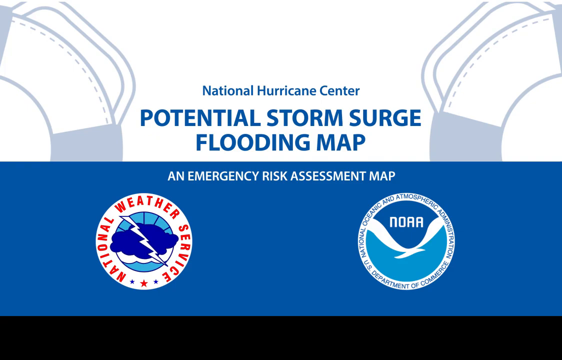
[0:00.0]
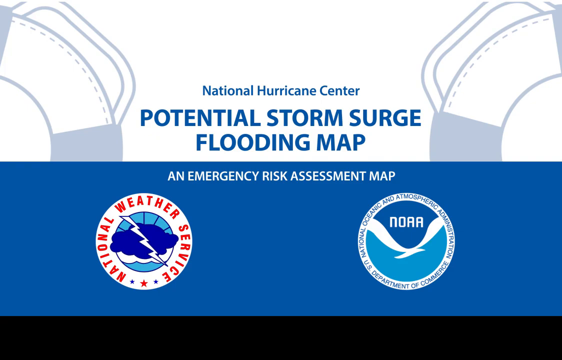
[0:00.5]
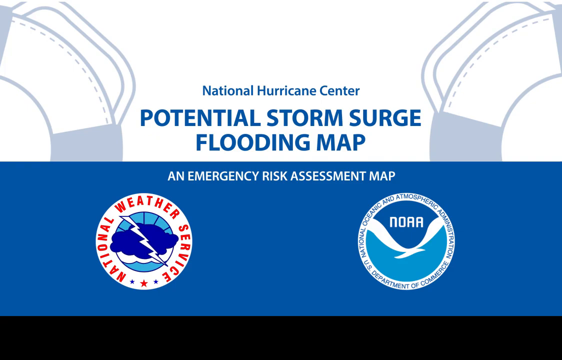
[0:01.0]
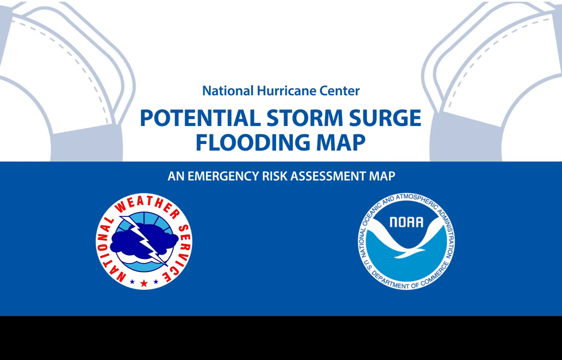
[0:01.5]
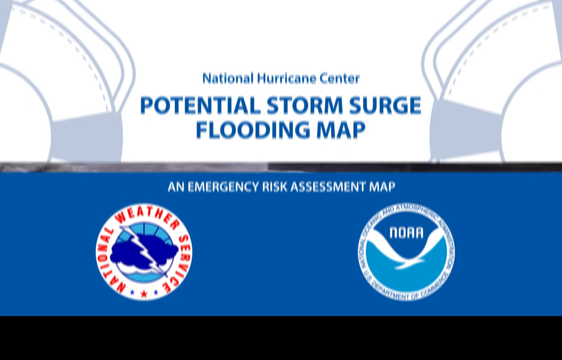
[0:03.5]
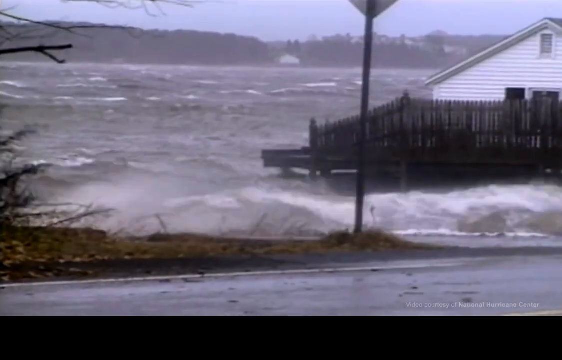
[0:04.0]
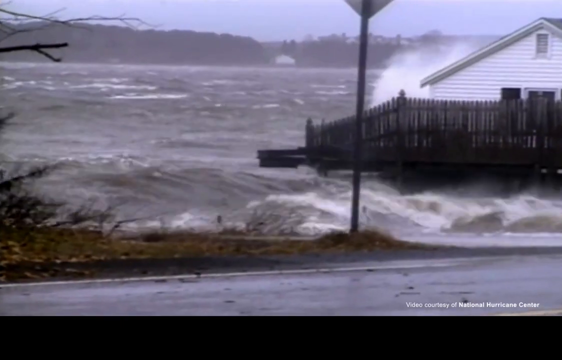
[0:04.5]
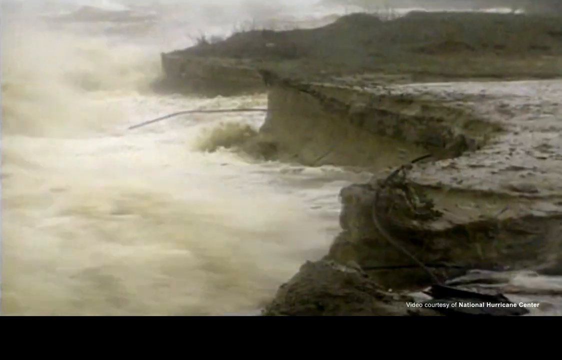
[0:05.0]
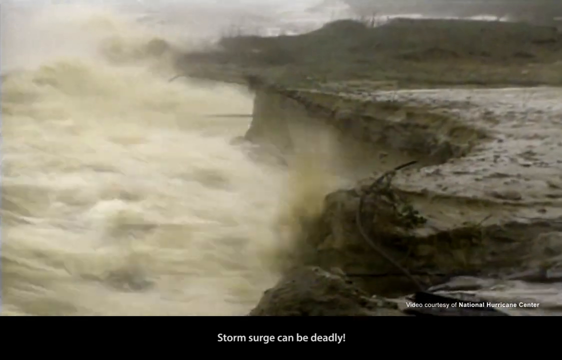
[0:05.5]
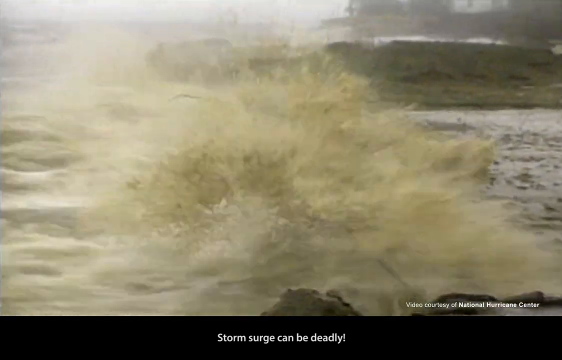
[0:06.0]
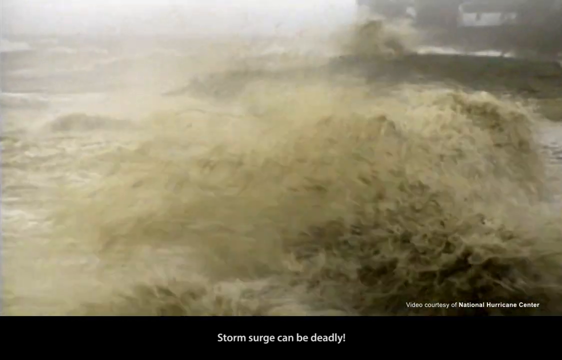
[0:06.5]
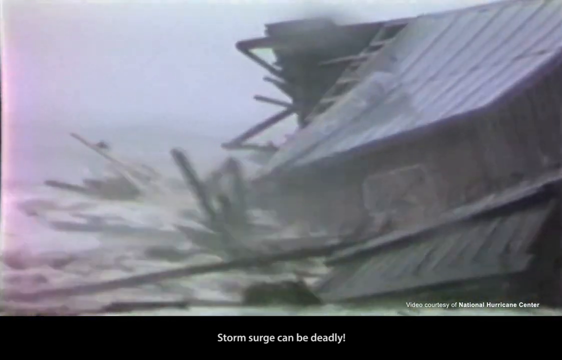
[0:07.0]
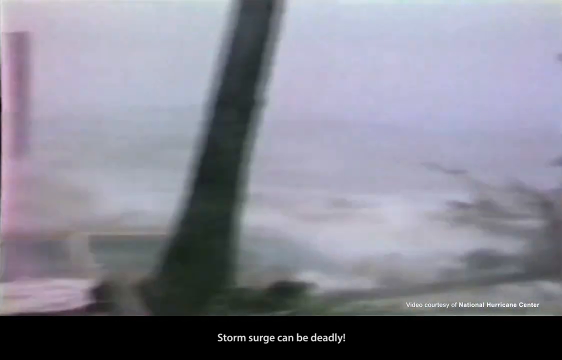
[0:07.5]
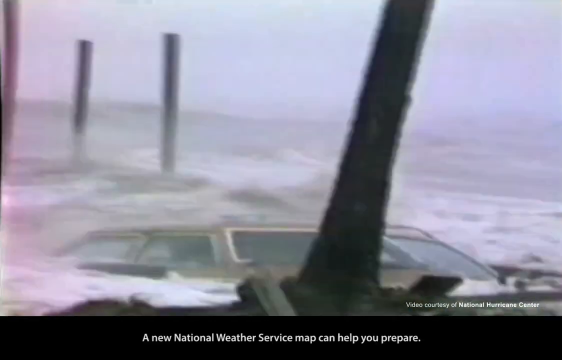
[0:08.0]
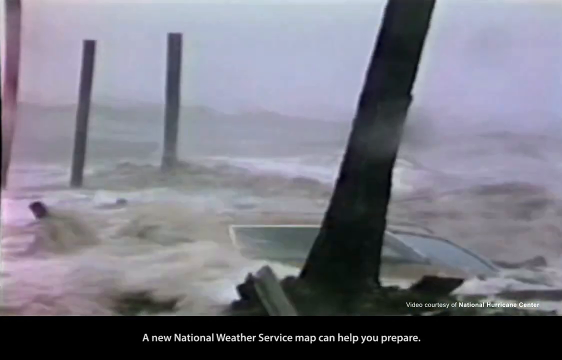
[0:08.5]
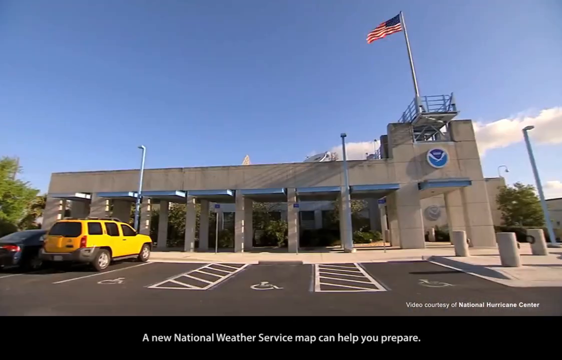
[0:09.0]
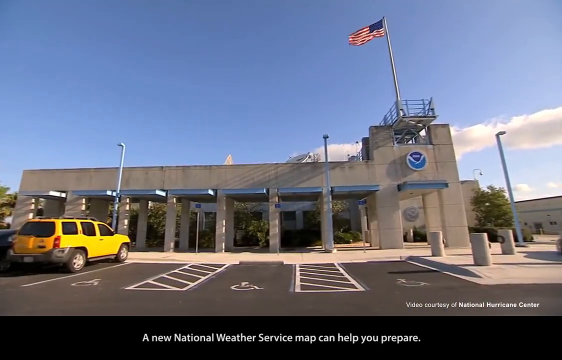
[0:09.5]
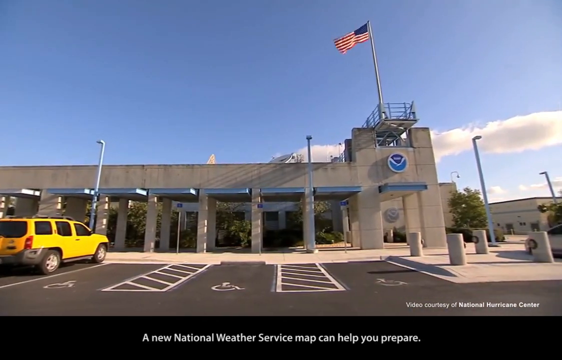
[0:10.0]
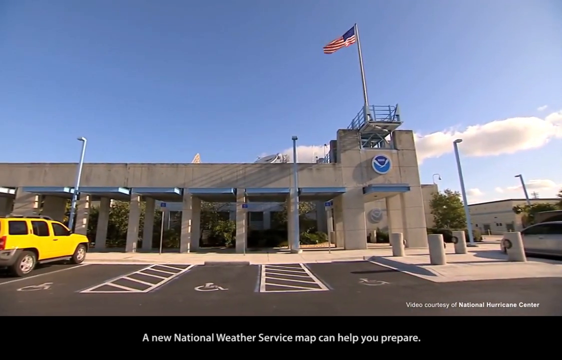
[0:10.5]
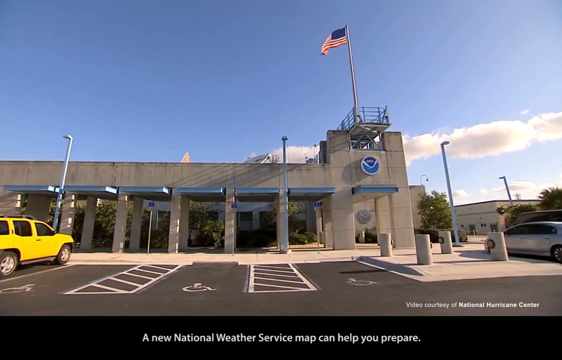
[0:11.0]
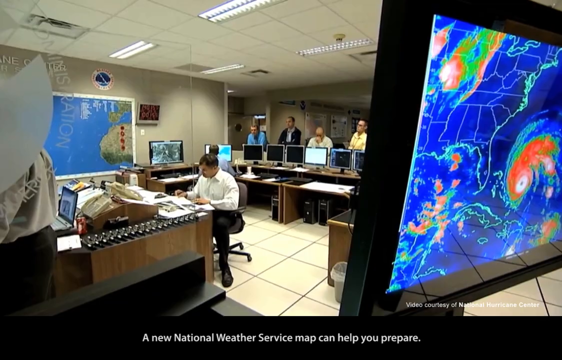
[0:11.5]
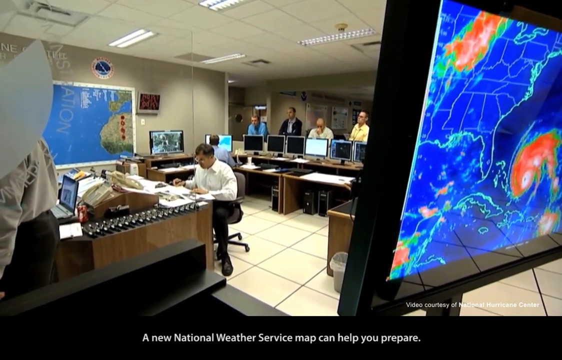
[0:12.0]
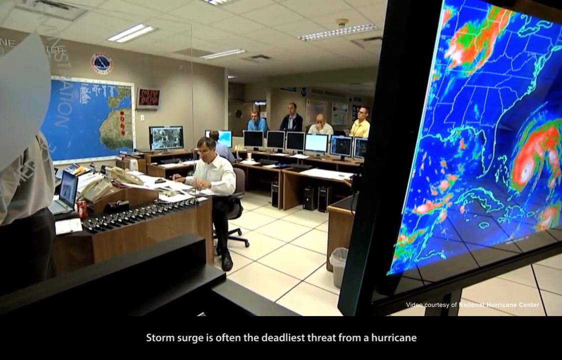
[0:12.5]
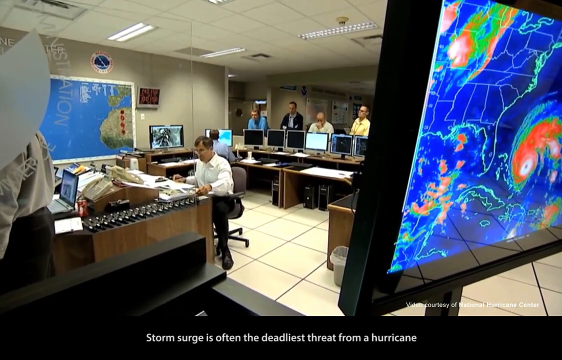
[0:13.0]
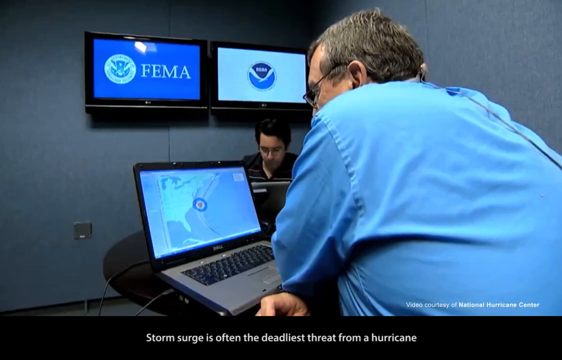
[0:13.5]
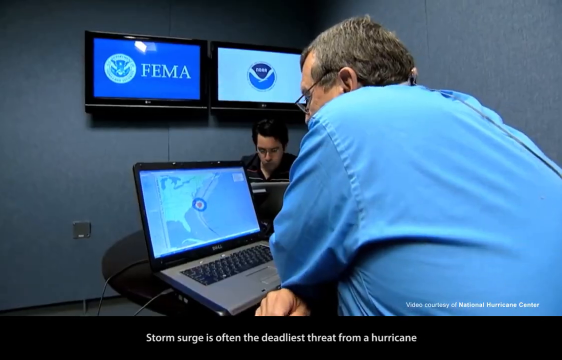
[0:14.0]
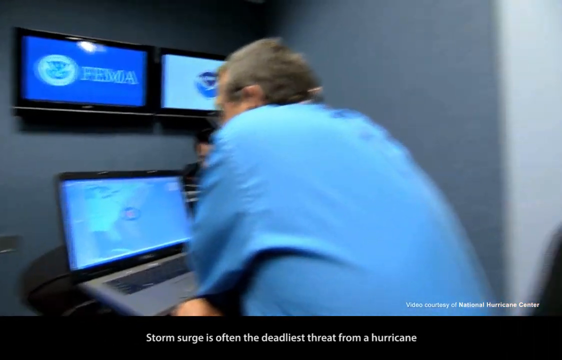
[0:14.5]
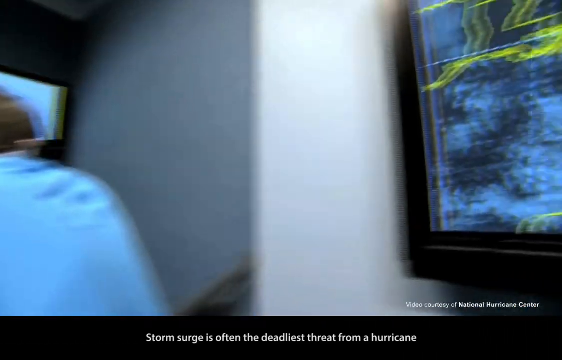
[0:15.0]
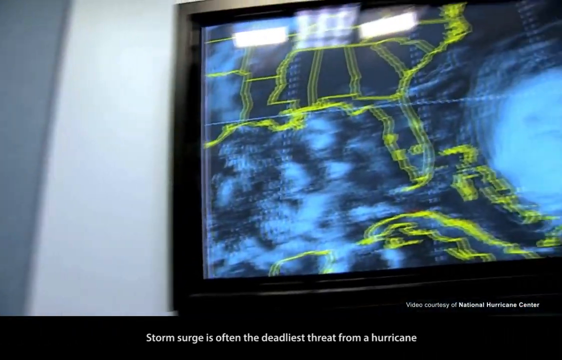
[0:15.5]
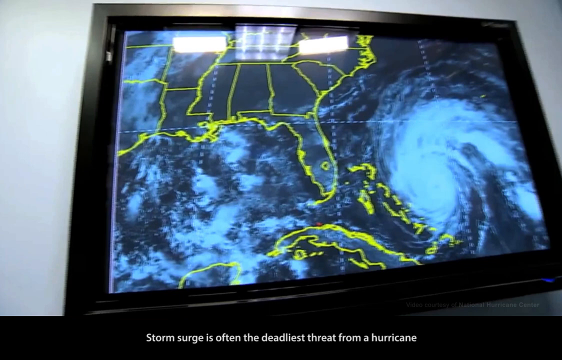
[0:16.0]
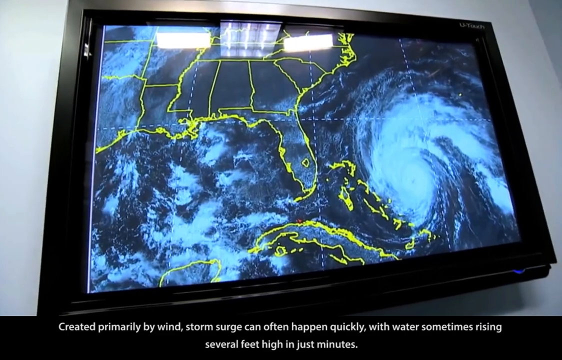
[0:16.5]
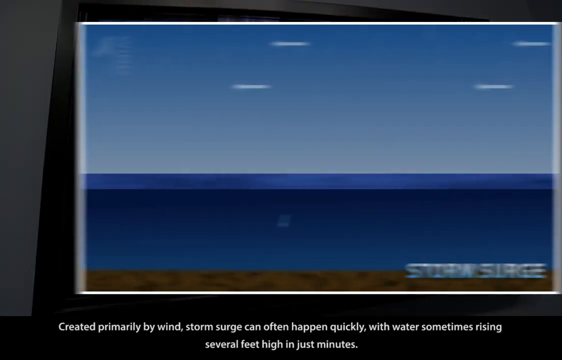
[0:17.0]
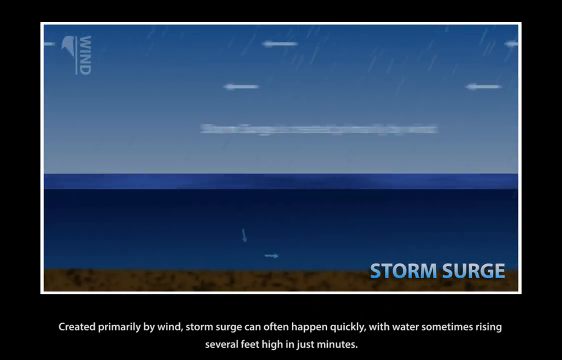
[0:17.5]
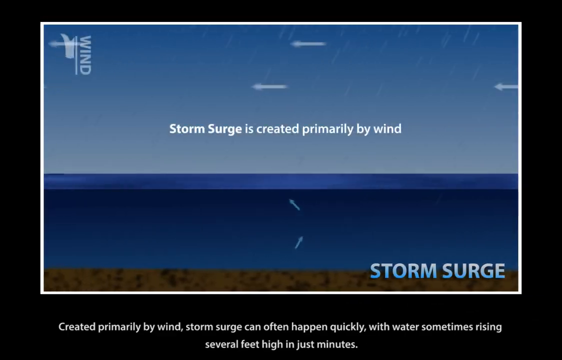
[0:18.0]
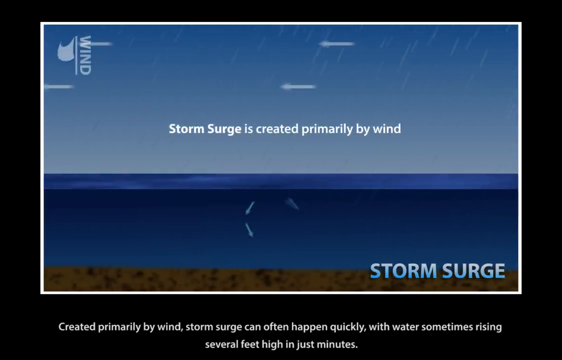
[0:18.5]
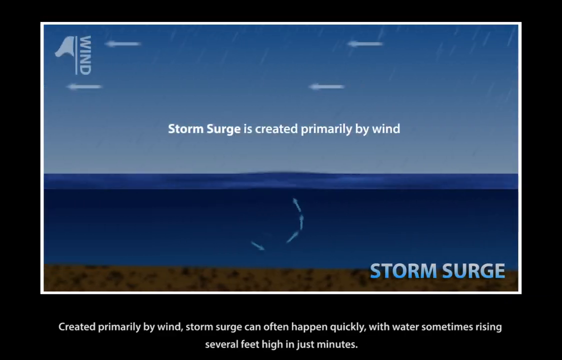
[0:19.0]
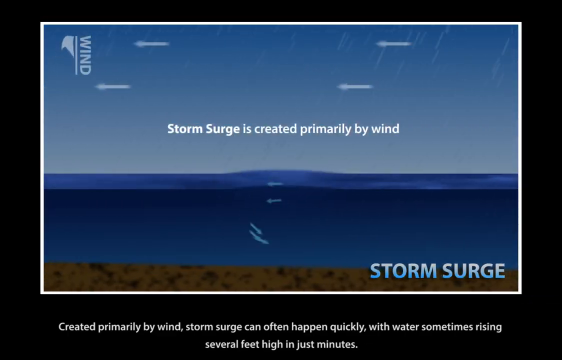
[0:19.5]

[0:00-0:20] The video opens on the National Hurricane Center potential storm surge flooding map screen, with text reading "an emergency risk assessment map." At the bottom it says "National Weather Service" next to a picture of clouds and lightning, and "NOAA" is on the right-hand side; both logos are in circles. A storm follows: water hits houses, houses are destroyed, roofs fall on houses, and cars are covered with water. Next comes the outside of a building with an American flag hanging. It is daytime and bright out. A yellow truck is parked in front, there are three handicapped spots in front, and there is a car to the right. The camera pans across. Inside an office, people sit, and a weather map is on a TV screen. A man at a desk wears a white button-down shirt, black pants and black shoes and shuffles through papers, while four men stand behind him looking at computer screens with yellow lines on them. A screen then reads "wind" and "storm surge is created primarily by wind," with "storm surge" at the bottom. The National Hurricane Center screen returns, followed by hurricane winds and water hitting the trees. The video then goes back to the men in the office with TV screens and laptops in front of them.